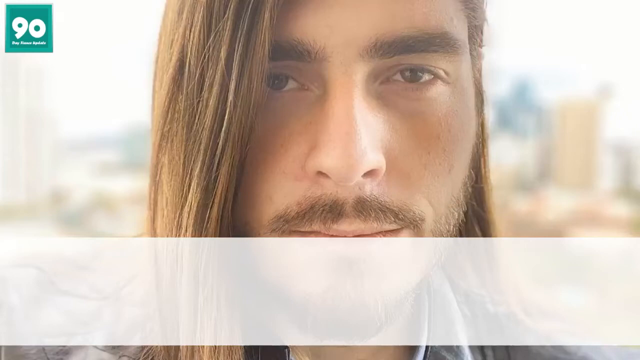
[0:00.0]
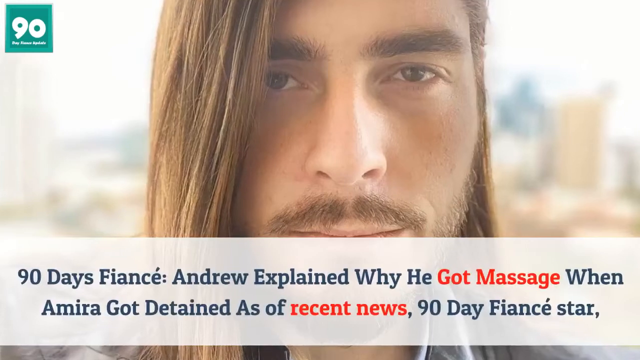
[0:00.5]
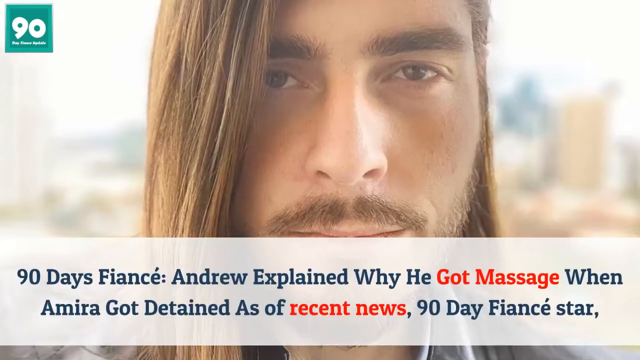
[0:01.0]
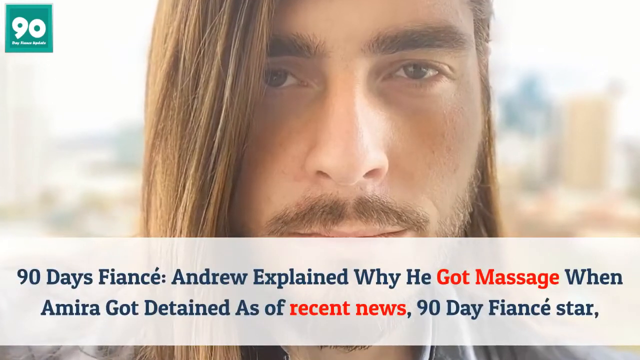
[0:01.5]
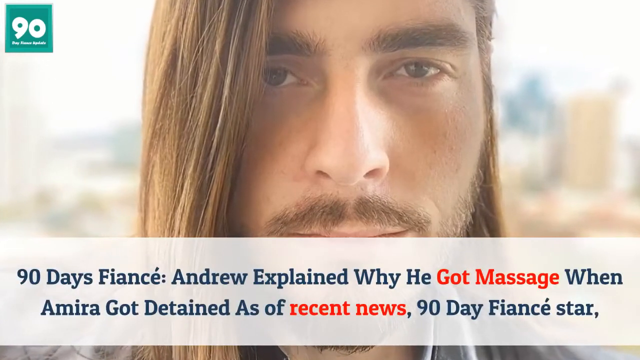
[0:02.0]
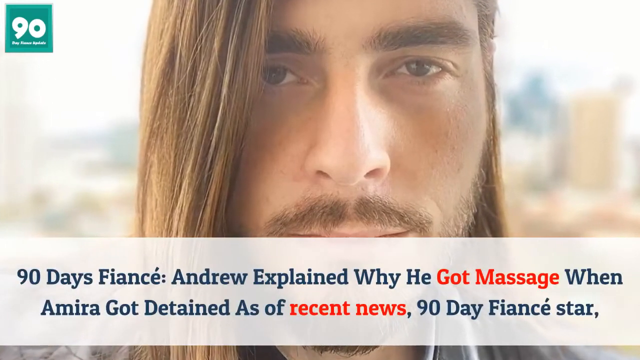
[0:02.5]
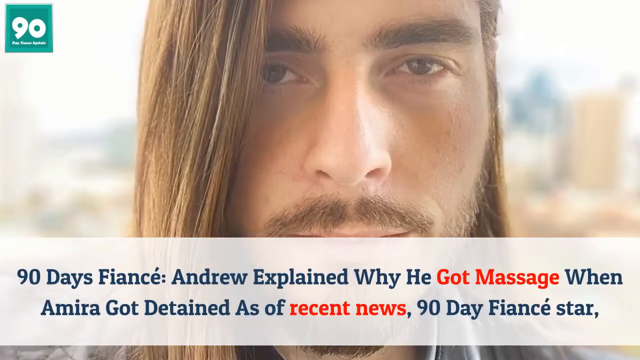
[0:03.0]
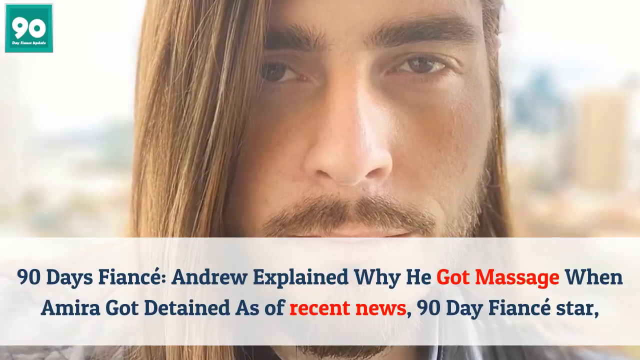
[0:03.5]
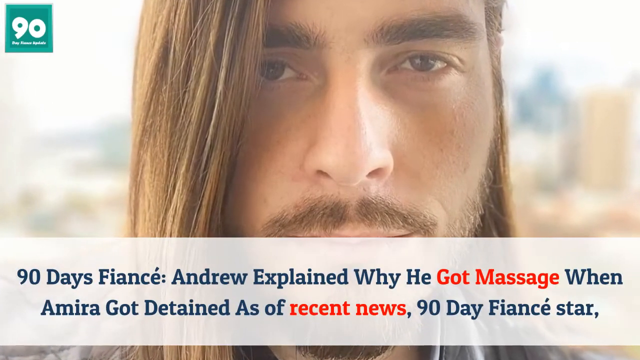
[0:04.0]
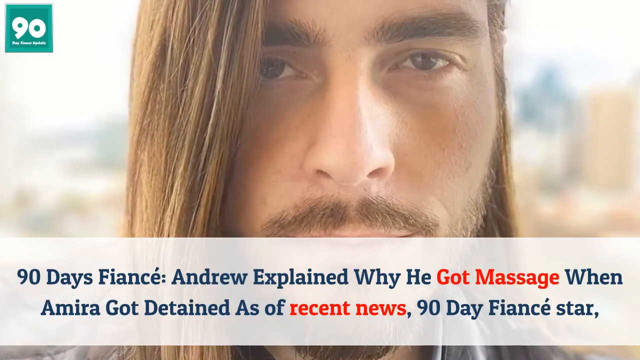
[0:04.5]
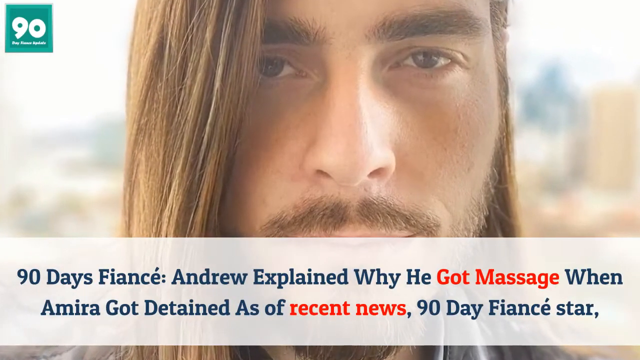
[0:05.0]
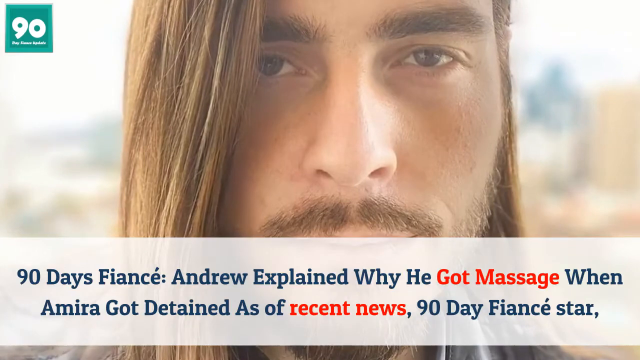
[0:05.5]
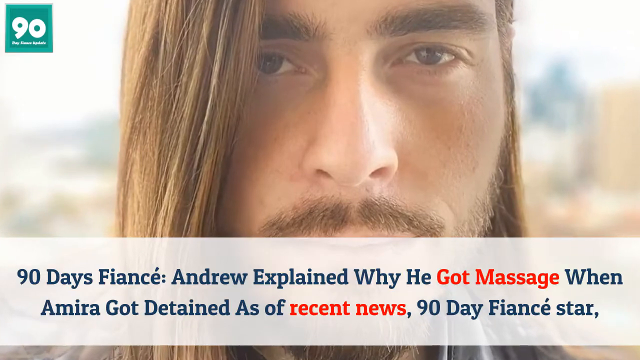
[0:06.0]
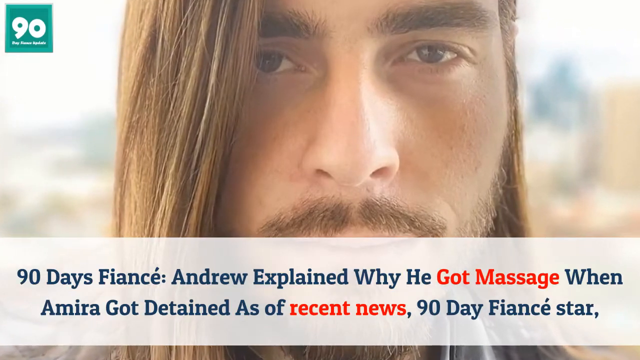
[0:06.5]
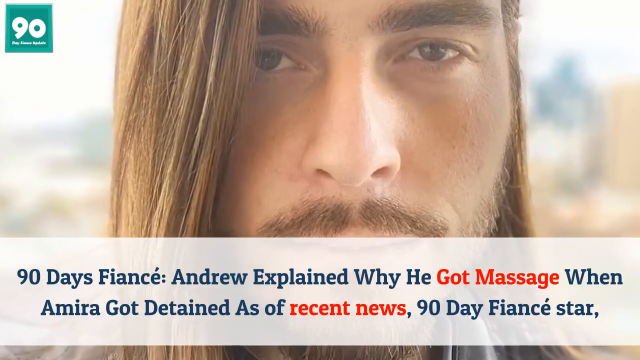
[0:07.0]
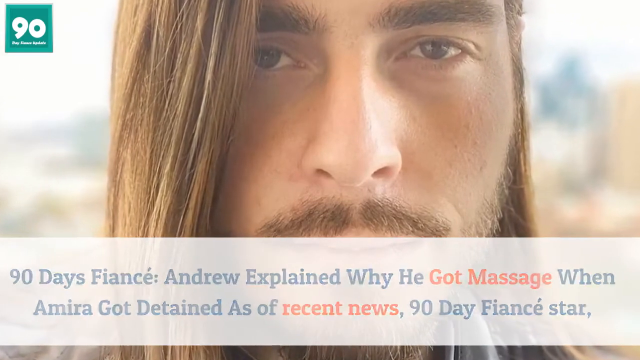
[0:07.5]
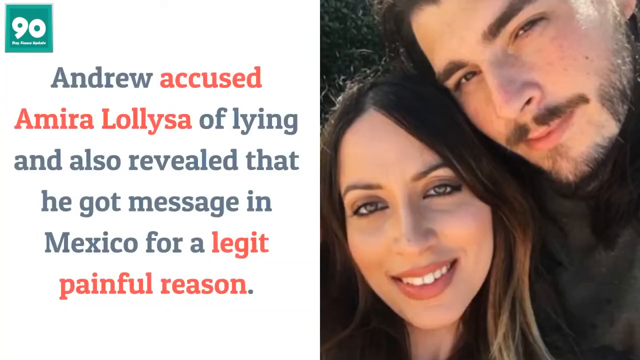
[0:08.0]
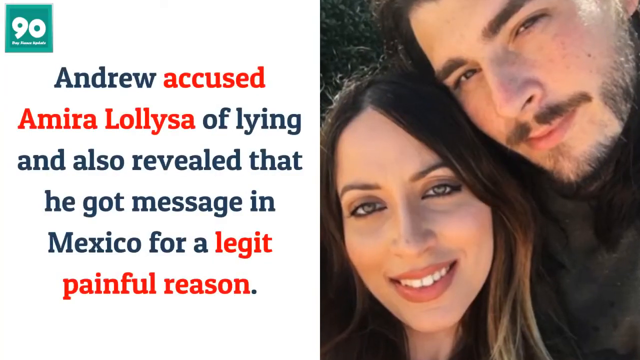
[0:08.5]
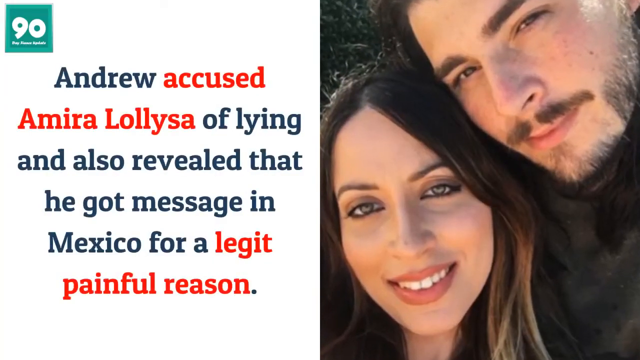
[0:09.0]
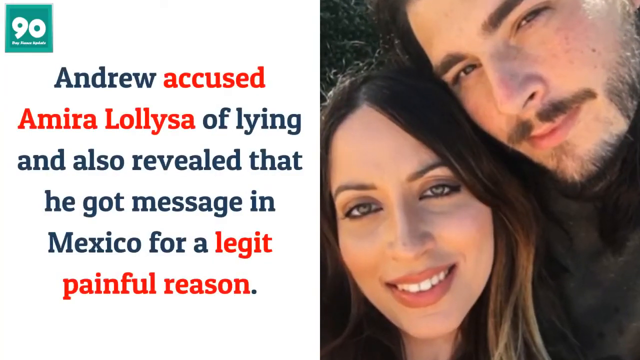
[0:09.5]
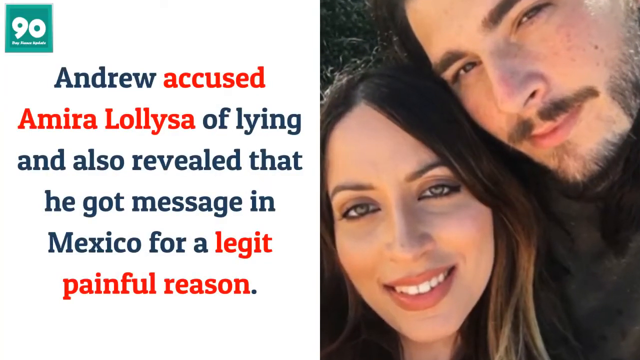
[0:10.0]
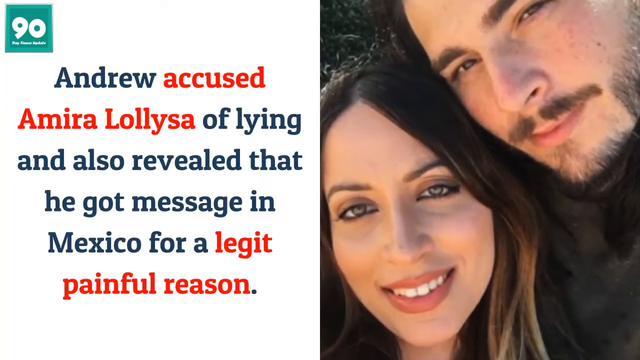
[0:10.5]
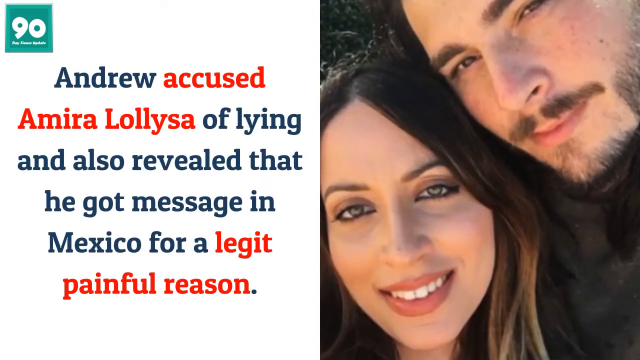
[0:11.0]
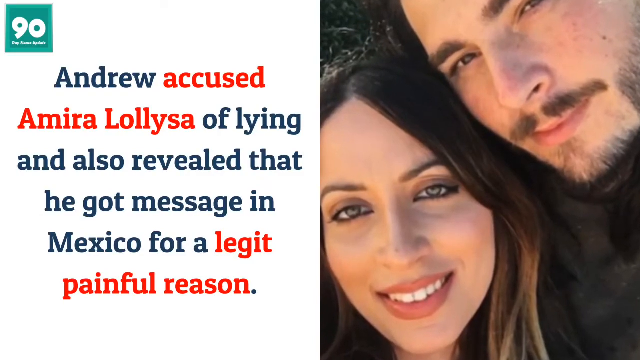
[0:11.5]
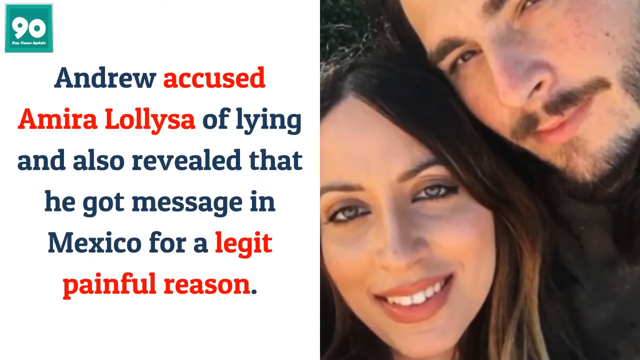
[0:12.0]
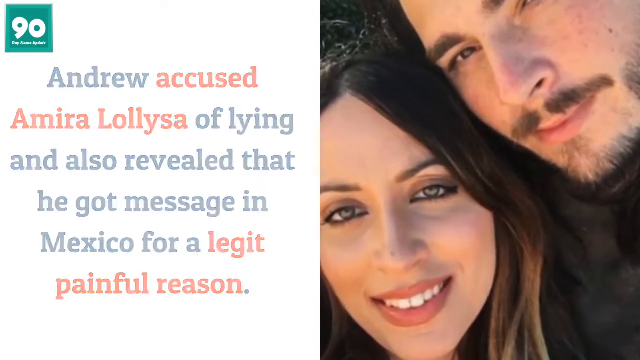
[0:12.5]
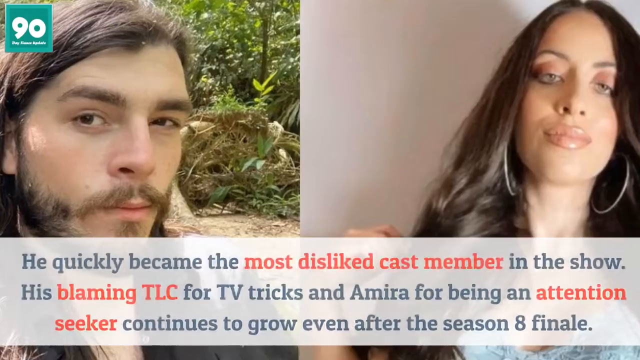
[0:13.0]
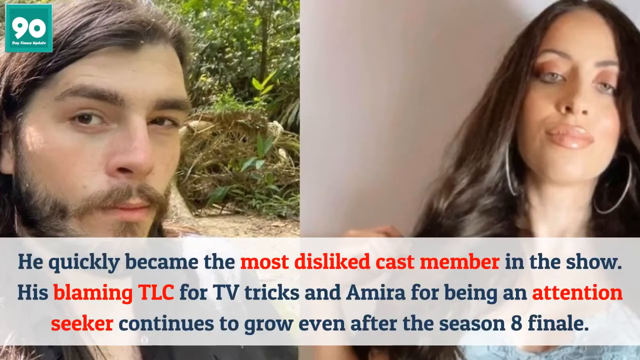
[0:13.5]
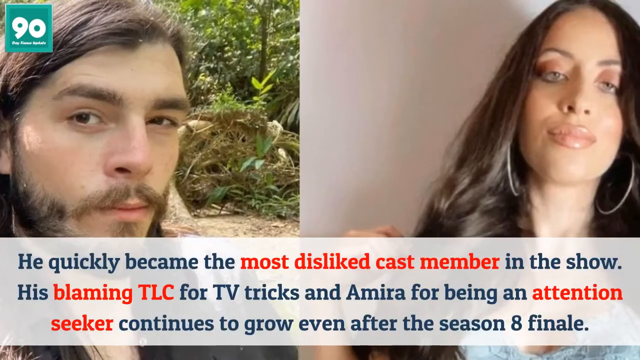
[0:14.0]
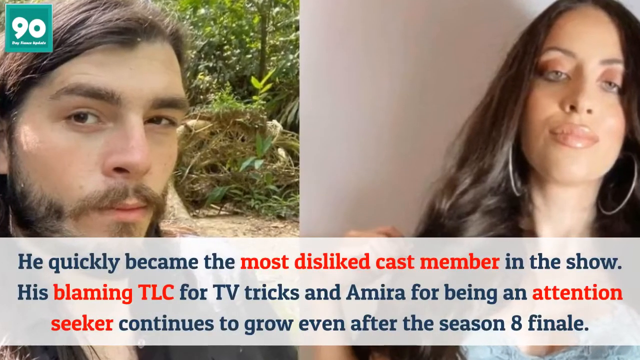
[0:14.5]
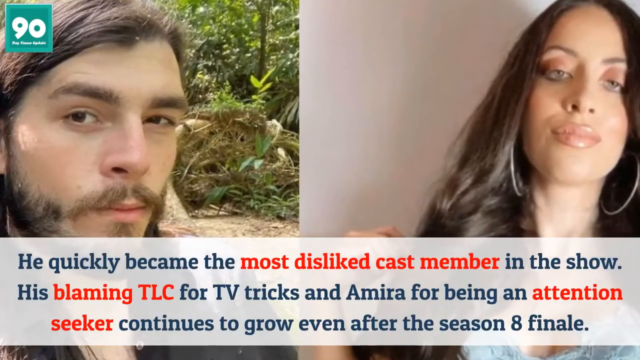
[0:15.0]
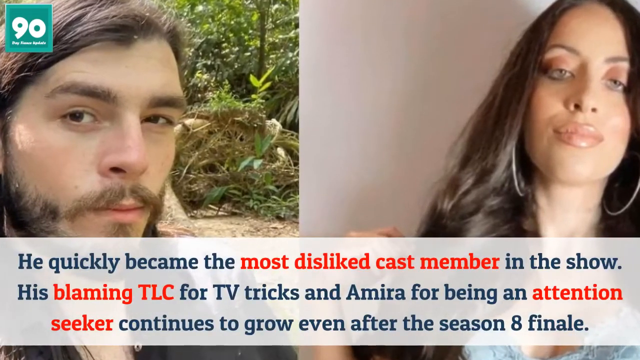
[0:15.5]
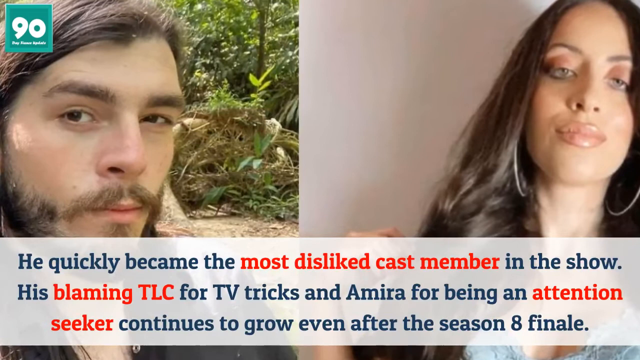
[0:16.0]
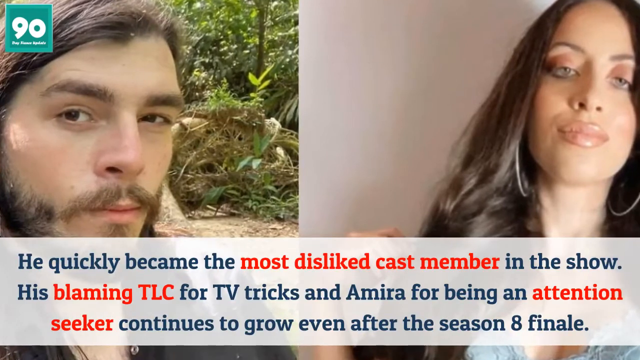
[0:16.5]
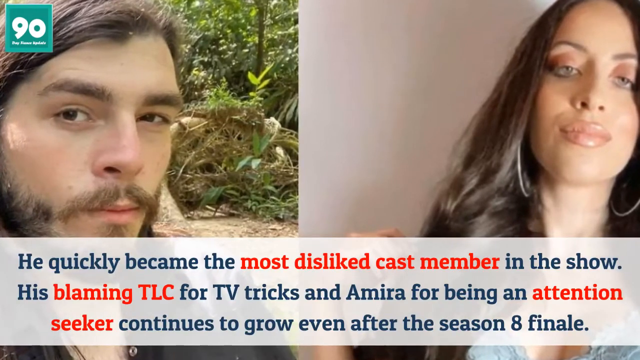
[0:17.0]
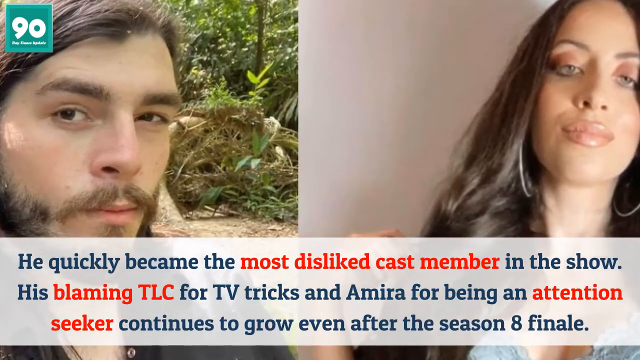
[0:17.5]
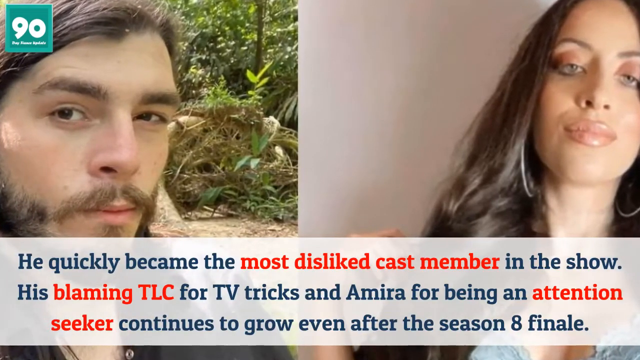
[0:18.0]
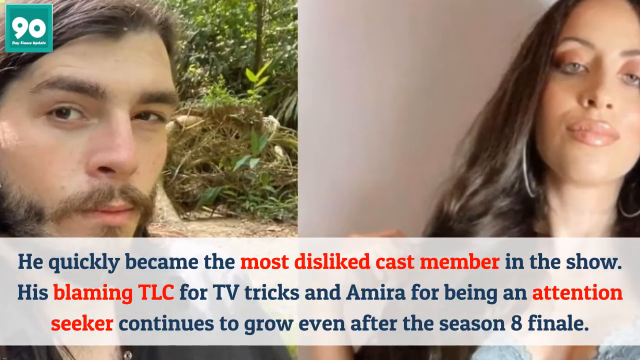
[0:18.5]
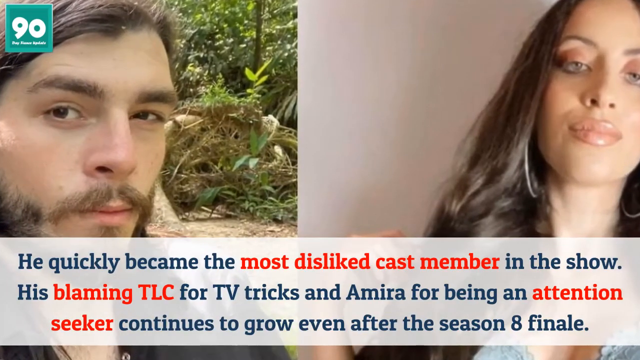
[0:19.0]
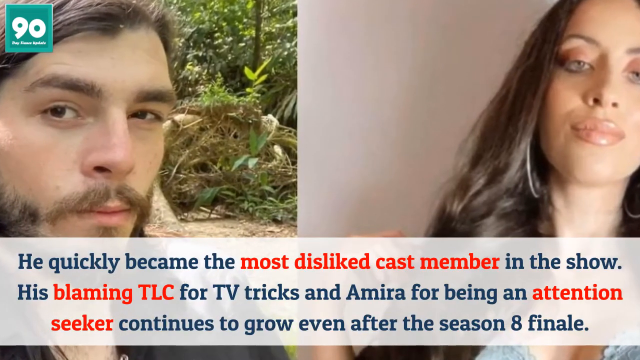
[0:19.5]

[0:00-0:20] The video opens with a picture of Andrew, a character from the reality TV show 90 Day Fiancé, in the background. He has long, dirty blonde hair, thick eyebrows, a light beard and a mustache. A caption in navy blue and red text is overlaid: "90 Day Fiancé: Andrew explained why he got massage when Amira got detained as of recent news, 90 Day Fiancé star." The screen cuts to another image of Andrew and Amira, who has long, dark hair, with the caption "Andrew accused Amira Lollysa of lying and also revealed that he got massage in Mexico for a legit painful reason." It then cuts to two separate pictures of Andrew and Amira side by side, with the caption "He quickly became the most disliked cast member in the show. His blaming TLC for TV tricks and Amira for being an attention seeker continues to grow even after the season 8 finale."